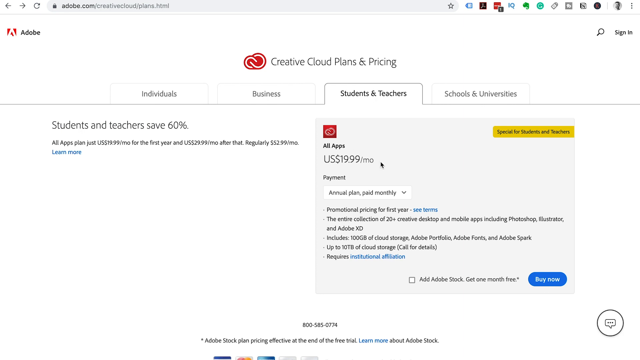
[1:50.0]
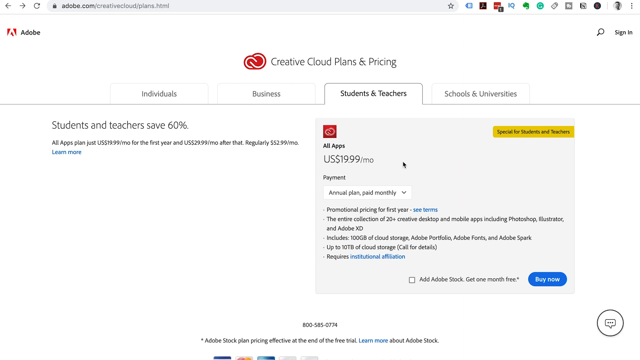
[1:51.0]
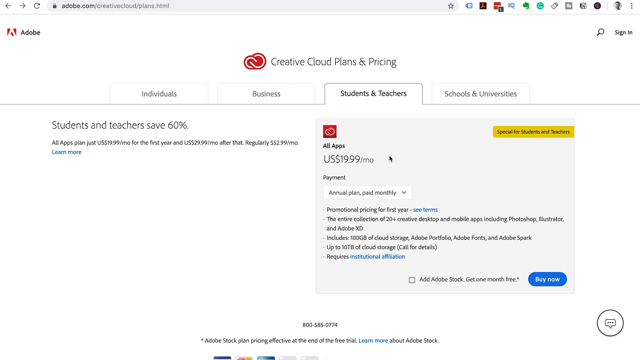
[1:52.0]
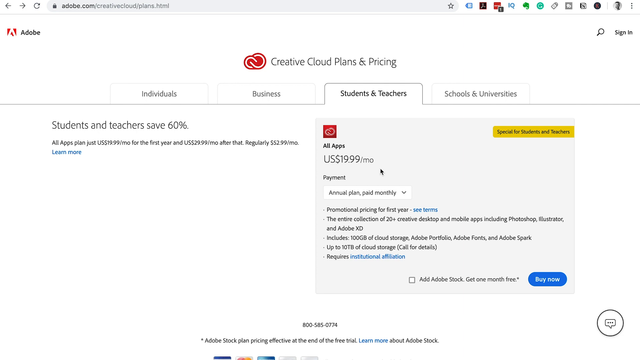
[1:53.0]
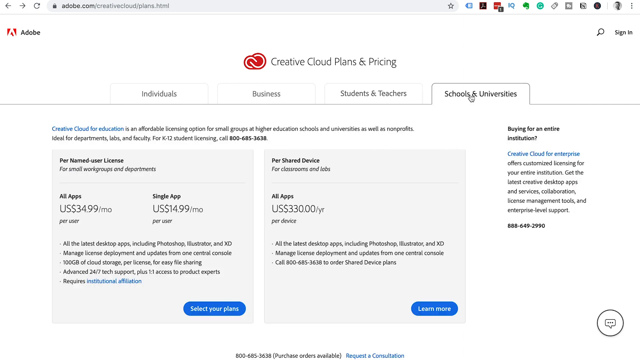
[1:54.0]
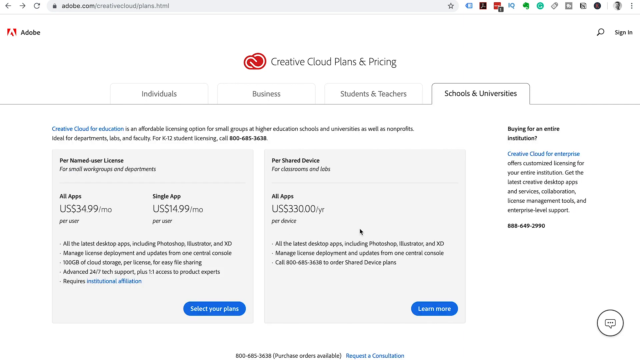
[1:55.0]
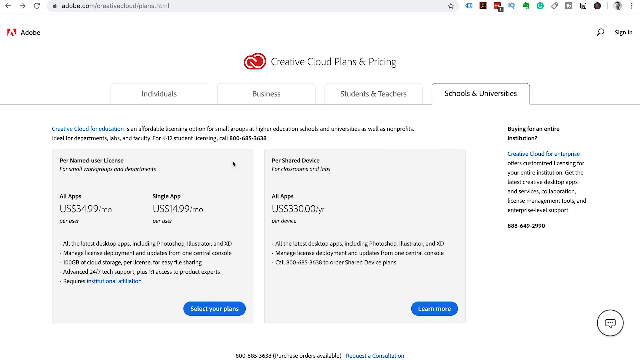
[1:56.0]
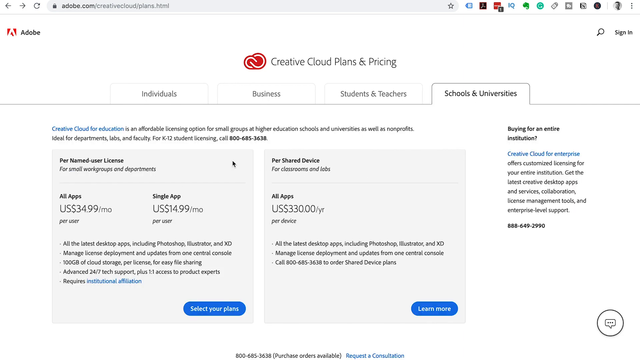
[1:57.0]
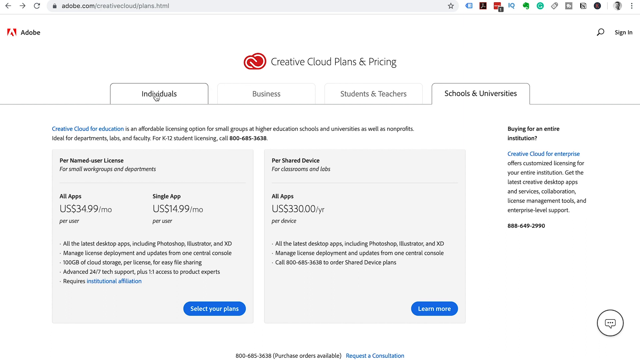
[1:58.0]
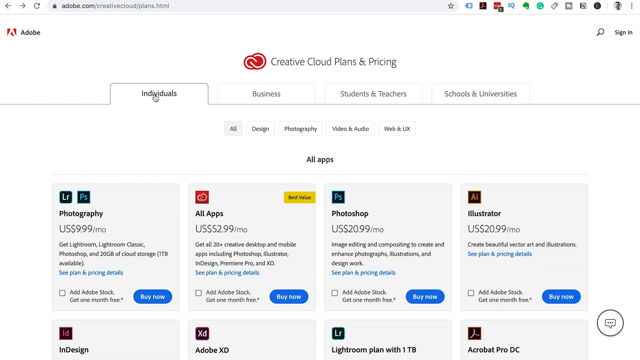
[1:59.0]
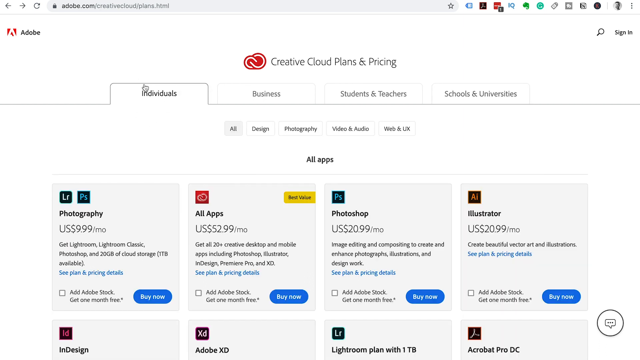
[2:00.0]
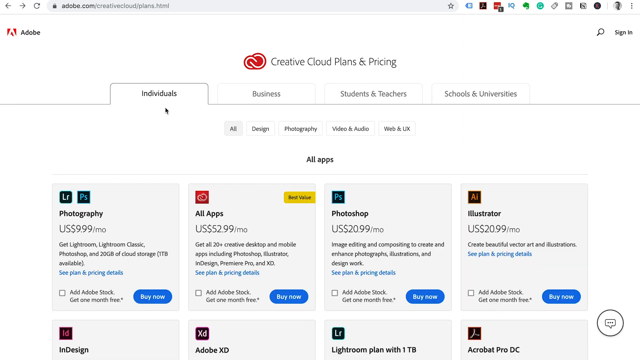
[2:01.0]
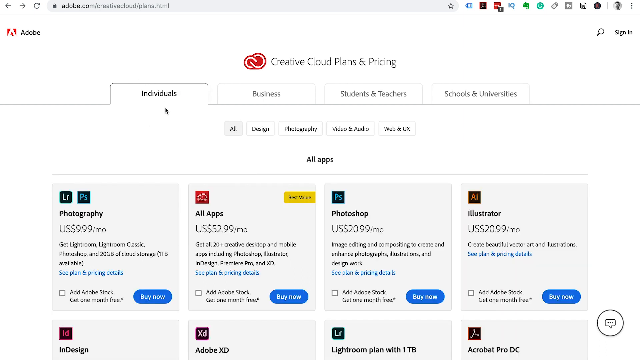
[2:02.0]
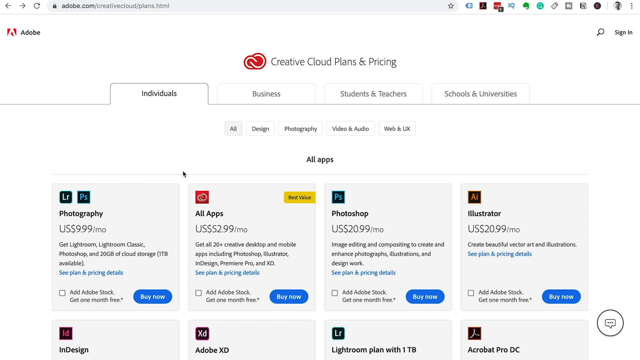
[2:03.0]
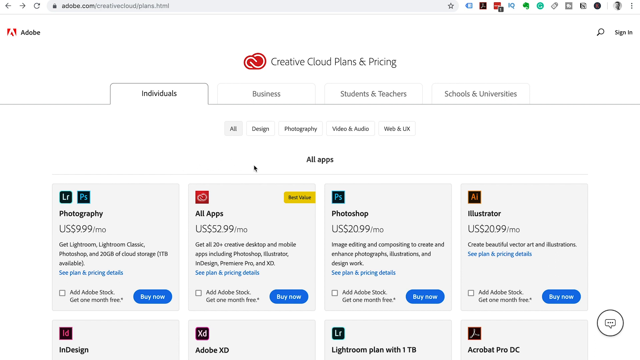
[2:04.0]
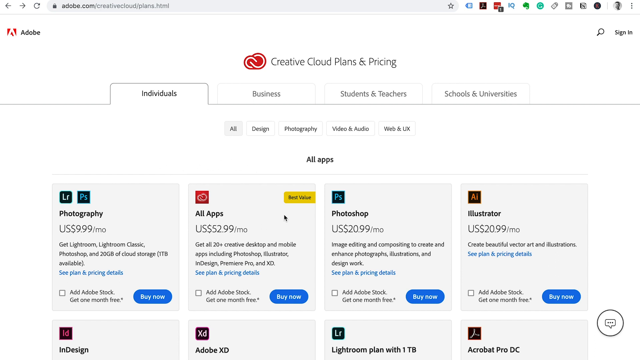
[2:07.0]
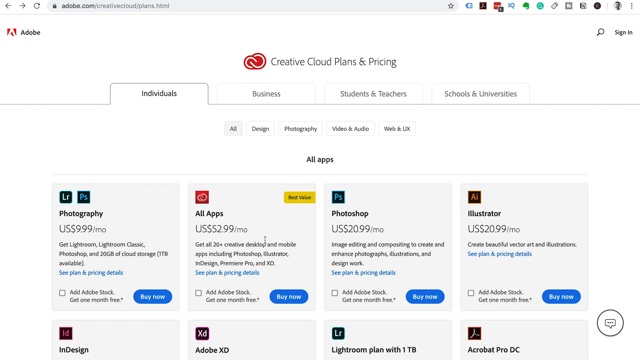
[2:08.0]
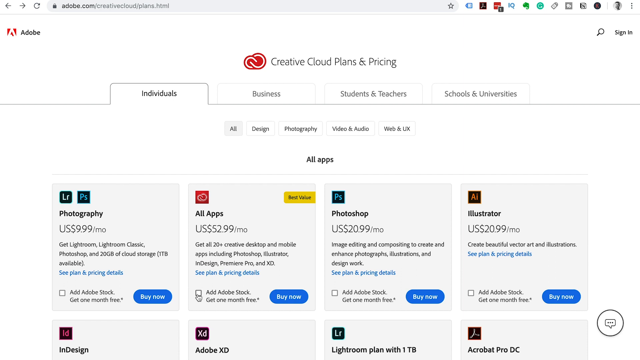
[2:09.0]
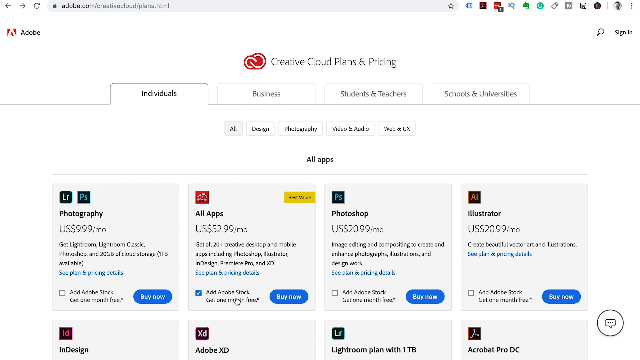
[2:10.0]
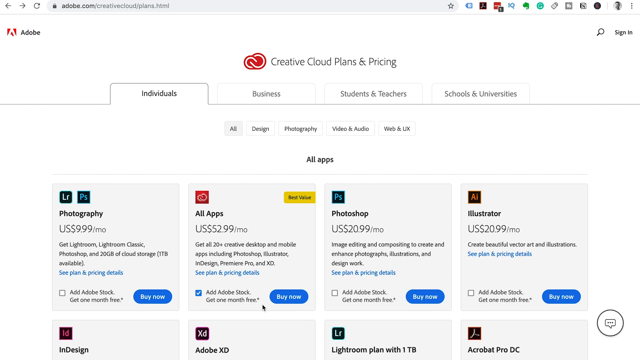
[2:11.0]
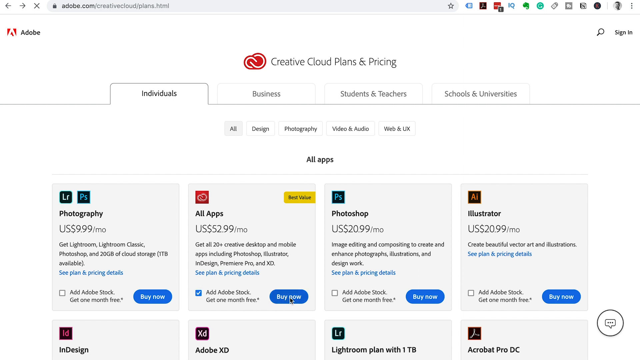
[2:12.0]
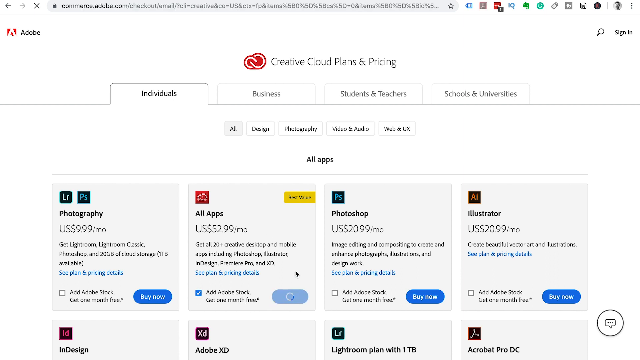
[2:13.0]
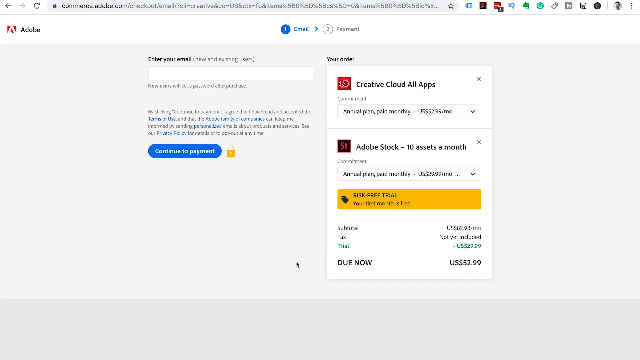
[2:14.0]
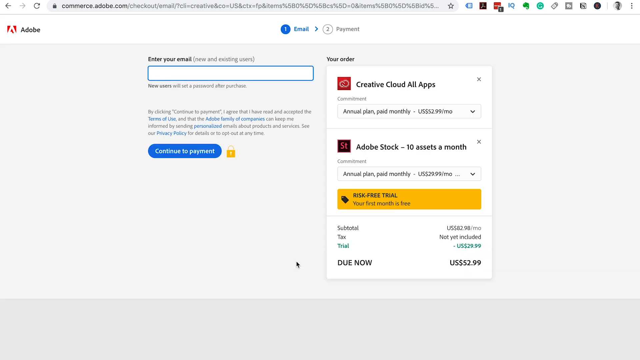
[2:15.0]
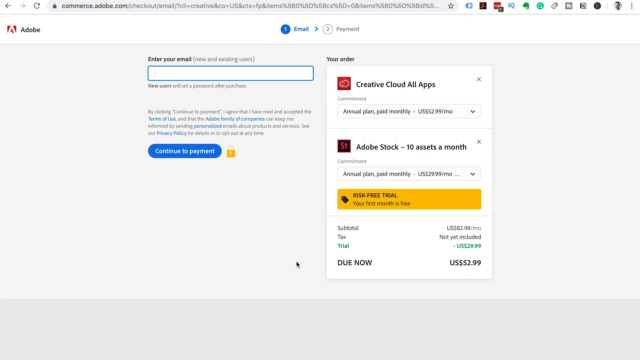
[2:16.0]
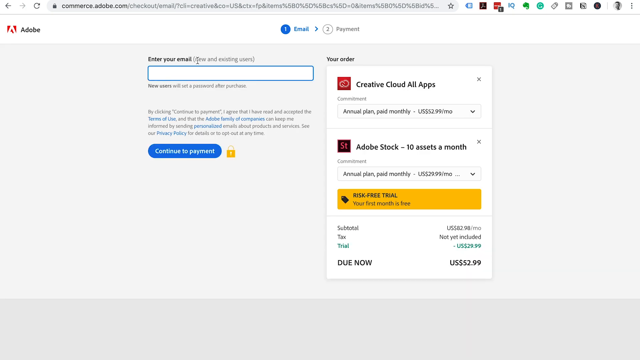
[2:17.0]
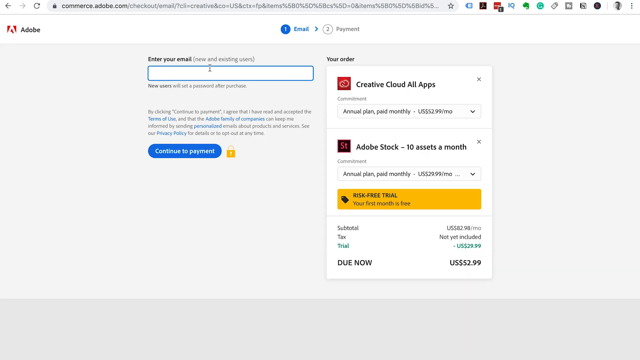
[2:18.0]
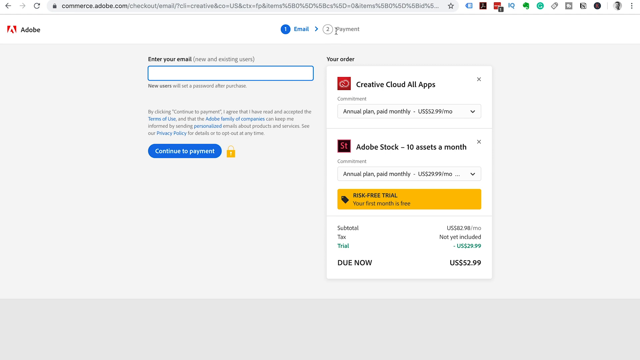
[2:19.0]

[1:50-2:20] Under the payment it says "annual plan, paid monthly" and "Promotional pricing for first year," with a link to see terms. The next line down says "the entire collection of 20 plus creative desktop and mobile apps including Photoshop, Illustrator, and Adobe XD." The next bullet point reads "includes 100 gigabytes of cloud storage, Adobe Portfolio" and also lists Adobe Spark. The next bullet says "up to 10 terabytes of cloud storage" followed by "(call for details)." The bottom bullet says "requires institutional affiliation," with a link. Below that it says "add Adobe stock for one month free" with a place to check, and at the bottom is a blue, oval-like link that says "buy now." The mouse hovers over the area where the price is. Then a tab for schools and universities is pushed.